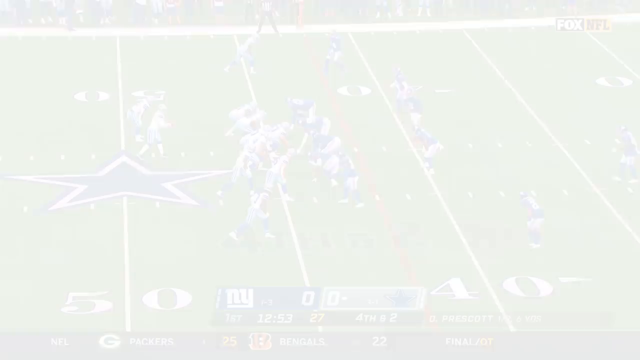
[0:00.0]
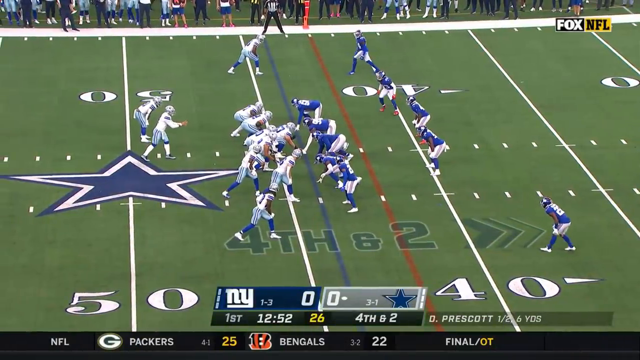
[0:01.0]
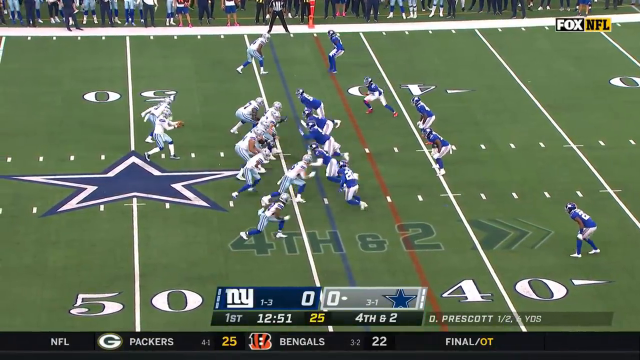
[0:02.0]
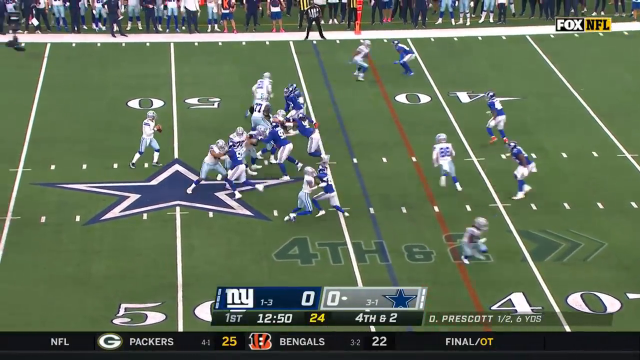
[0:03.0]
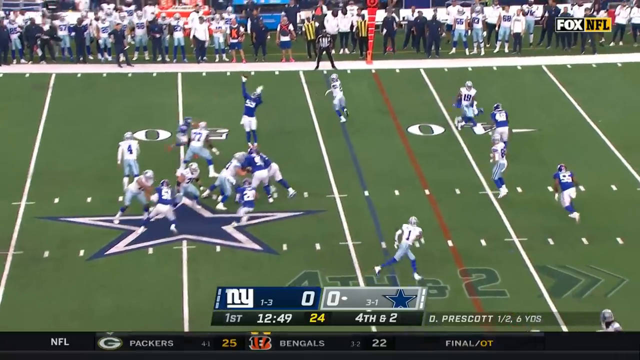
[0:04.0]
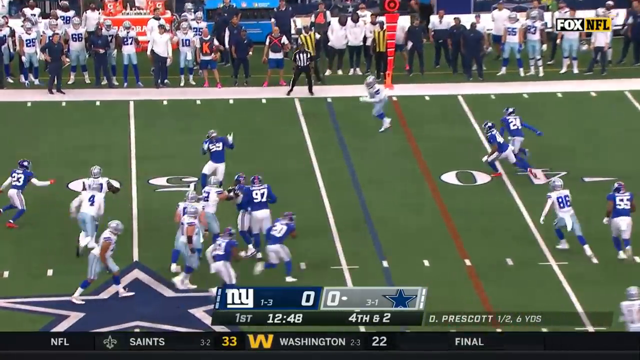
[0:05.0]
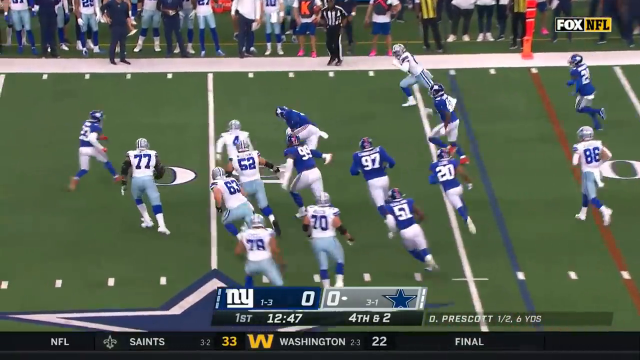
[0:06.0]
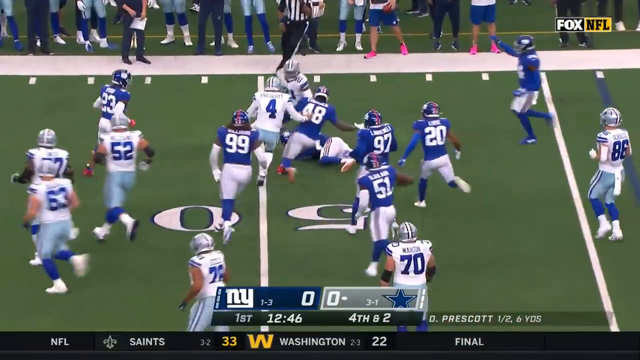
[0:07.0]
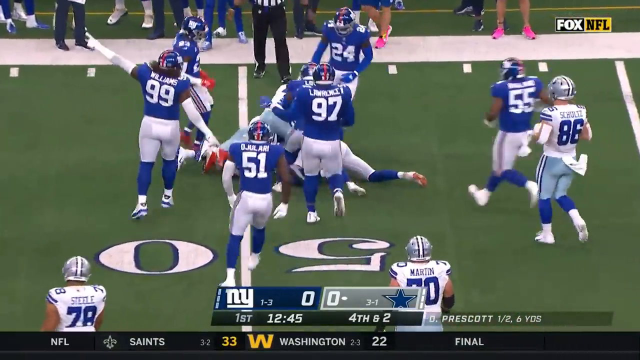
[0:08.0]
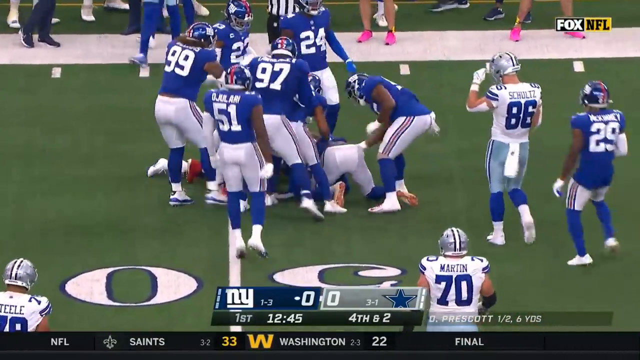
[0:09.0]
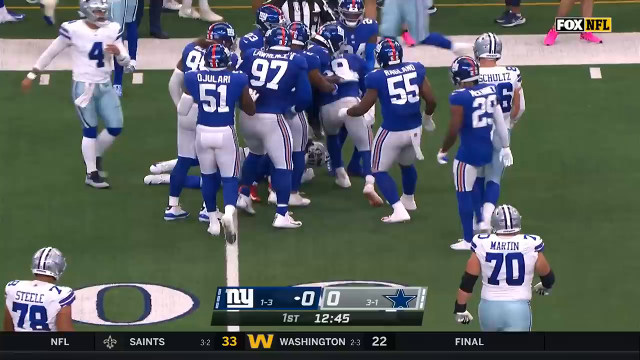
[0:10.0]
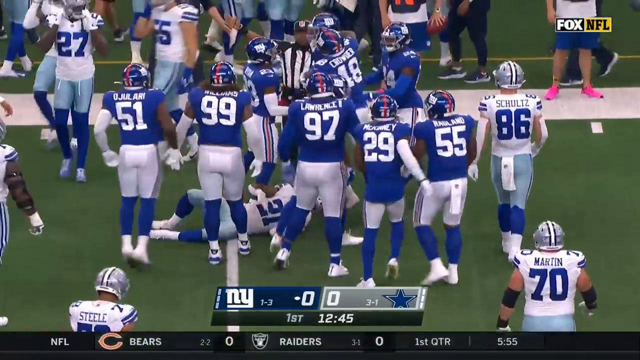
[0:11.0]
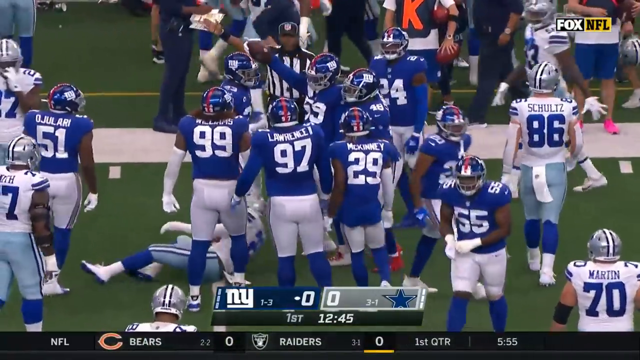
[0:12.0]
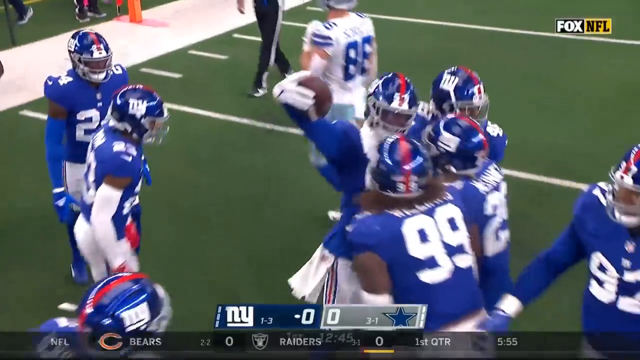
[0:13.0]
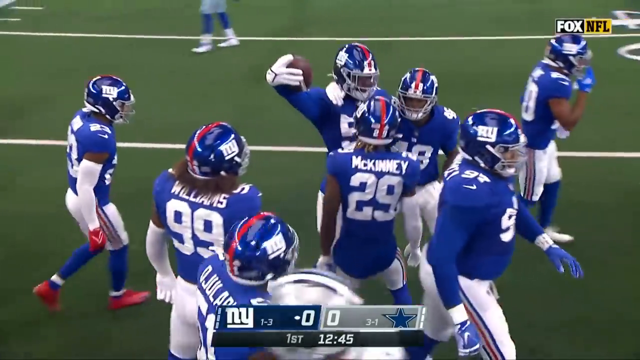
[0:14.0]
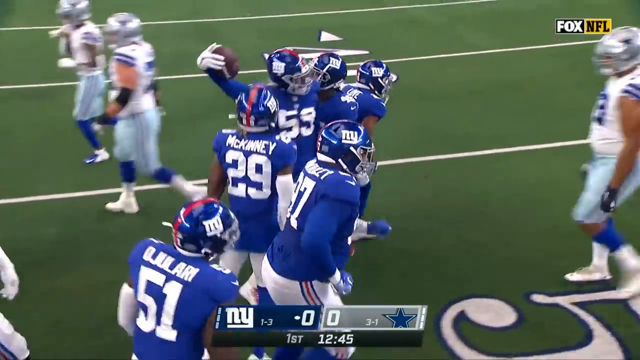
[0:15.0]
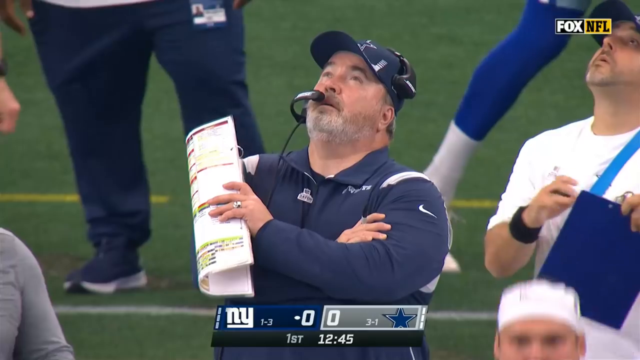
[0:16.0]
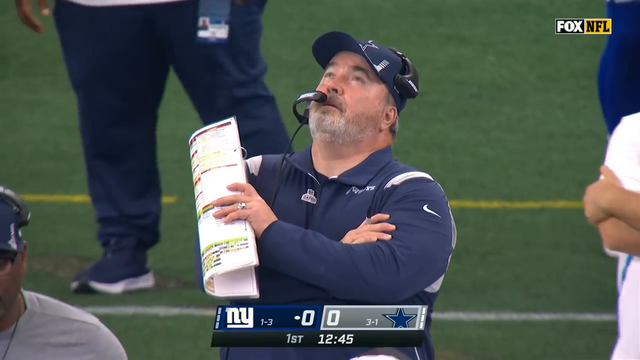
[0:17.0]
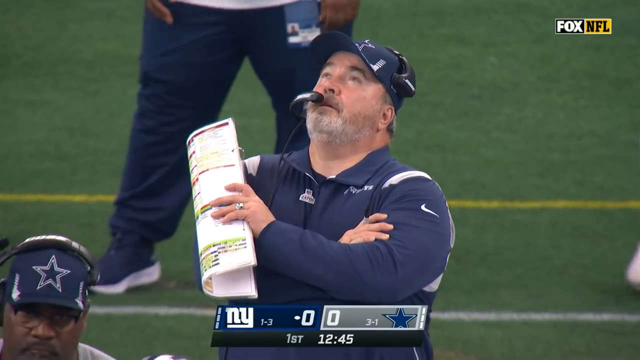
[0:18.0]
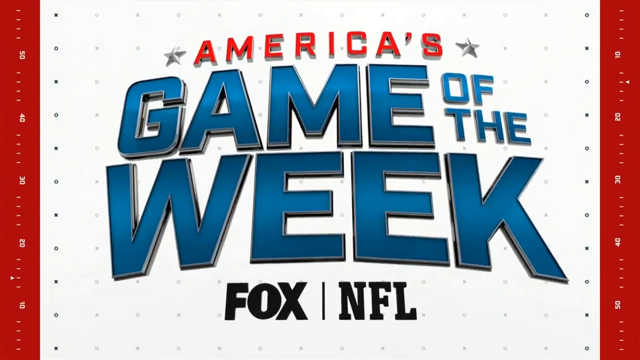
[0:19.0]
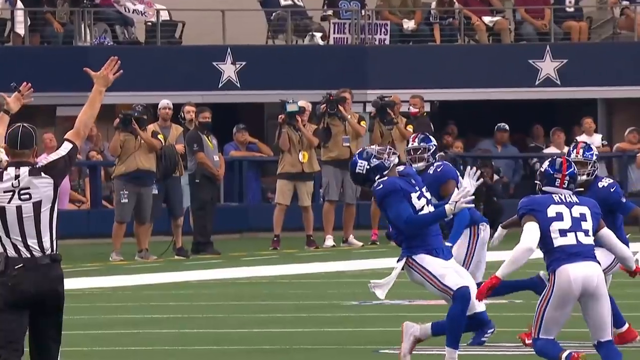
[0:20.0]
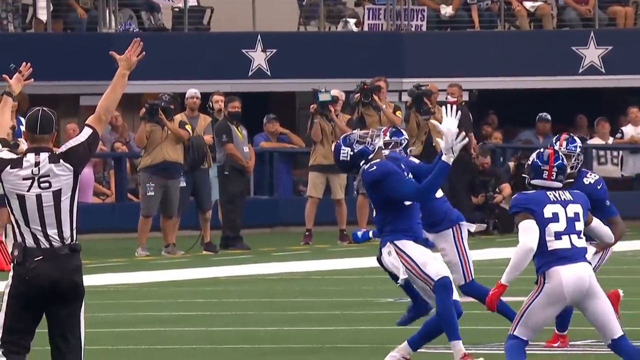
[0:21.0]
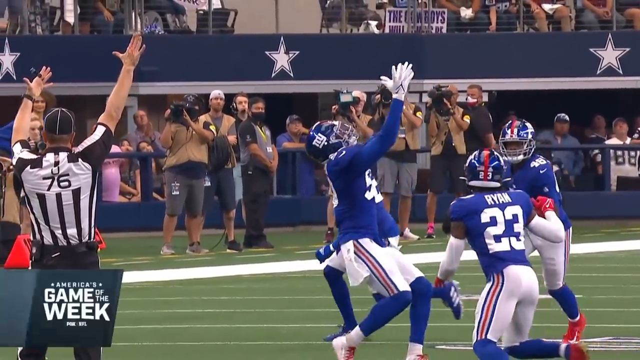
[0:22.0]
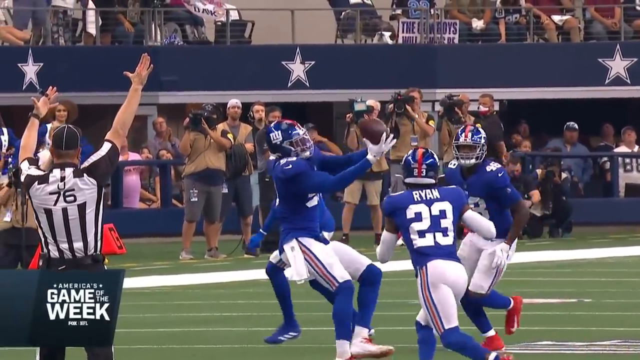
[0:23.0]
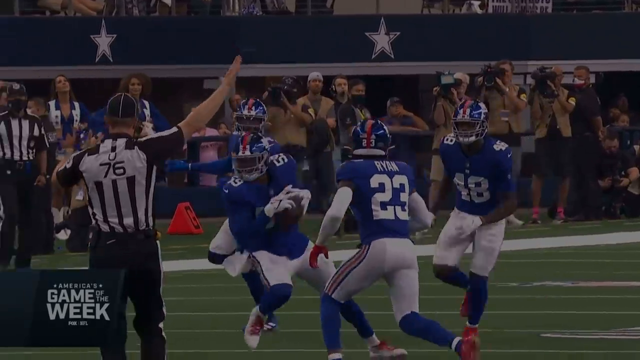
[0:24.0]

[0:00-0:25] The video begins with a football thumbnail showing a player who plays for the New York Giants holding up a football. When playback is attempted, a warning appears instead: the video is blacked out and cannot be played. The screen is black with the text "Video unavailable" and a circle with an exclamation point in the middle. Text reads "This video contains content from the NFL who has blocked it from display on this website or application." Below it is an underlined link that says "Watch on YouTube", and the YouTube logo is in the bottom right.